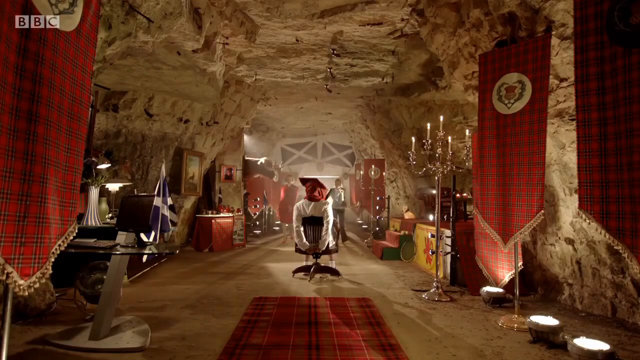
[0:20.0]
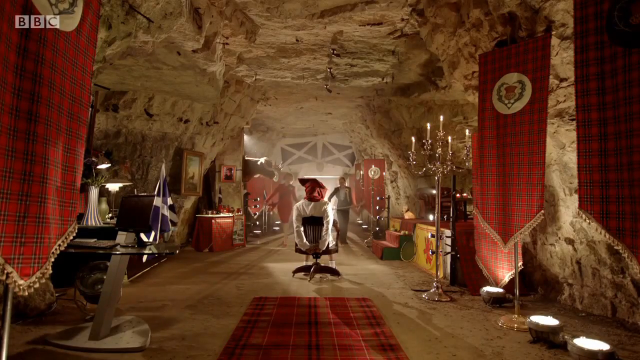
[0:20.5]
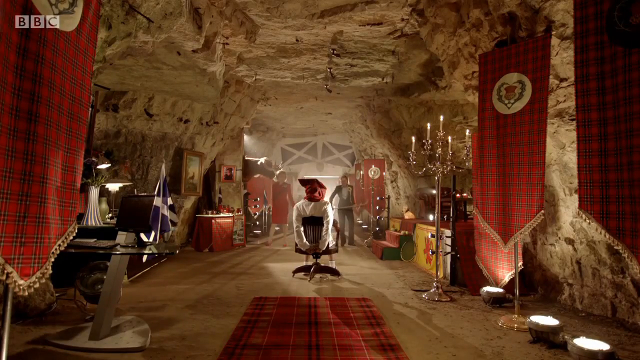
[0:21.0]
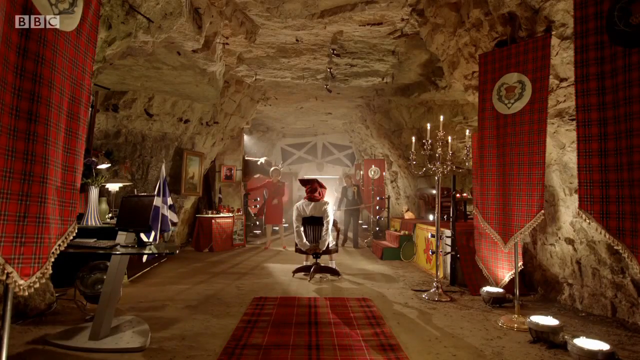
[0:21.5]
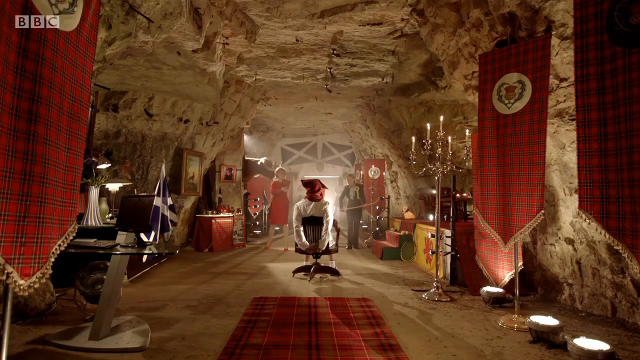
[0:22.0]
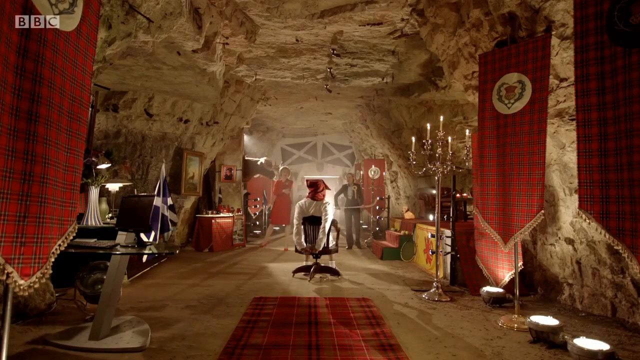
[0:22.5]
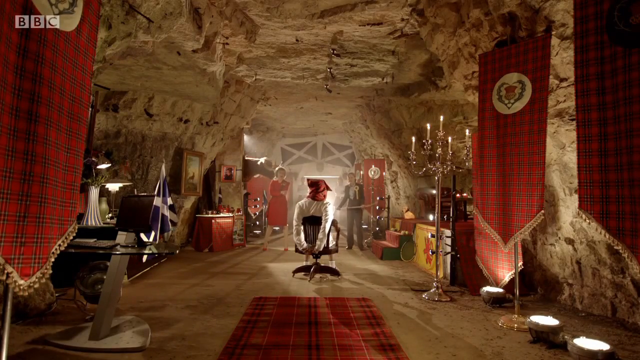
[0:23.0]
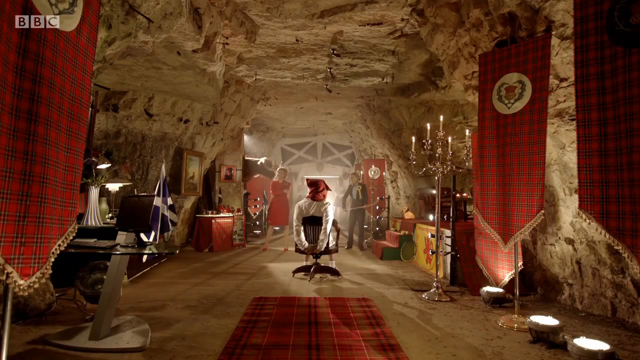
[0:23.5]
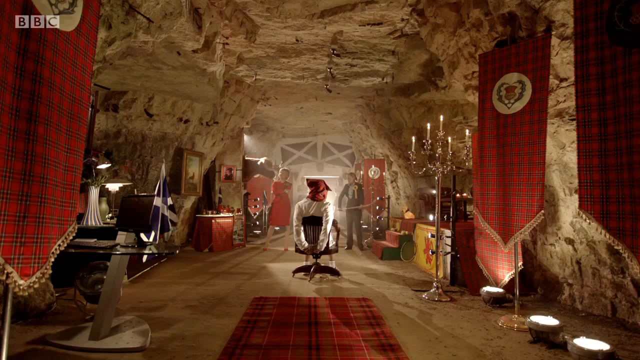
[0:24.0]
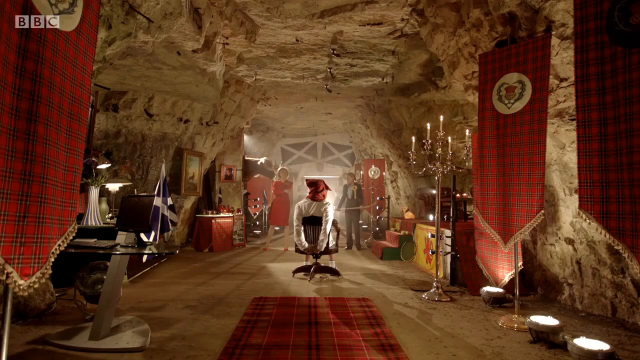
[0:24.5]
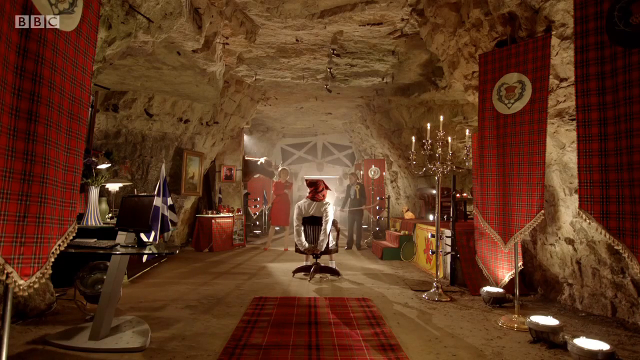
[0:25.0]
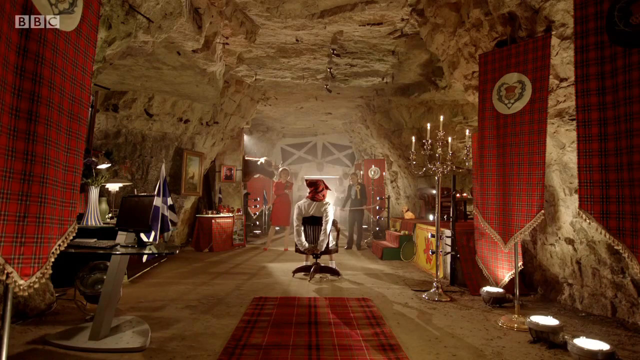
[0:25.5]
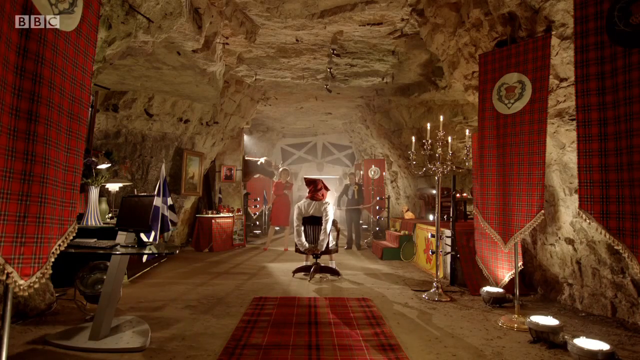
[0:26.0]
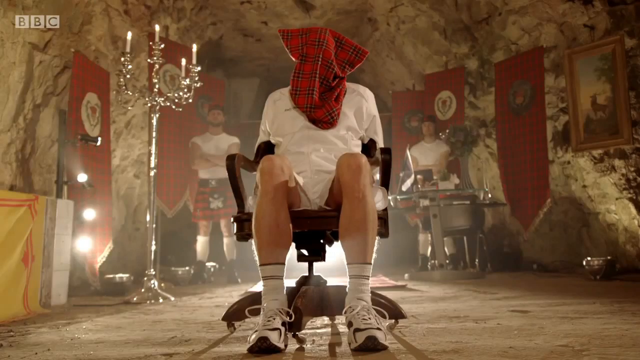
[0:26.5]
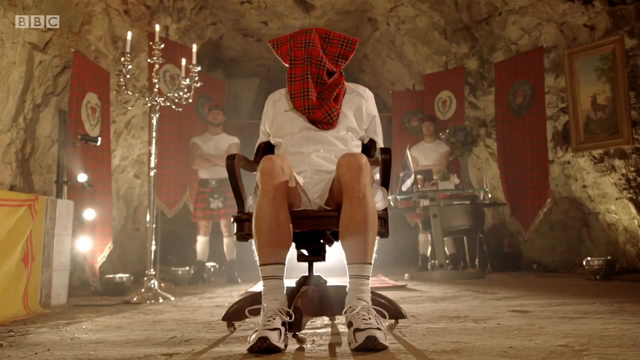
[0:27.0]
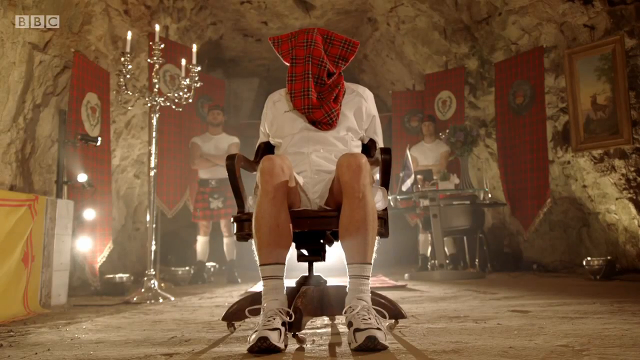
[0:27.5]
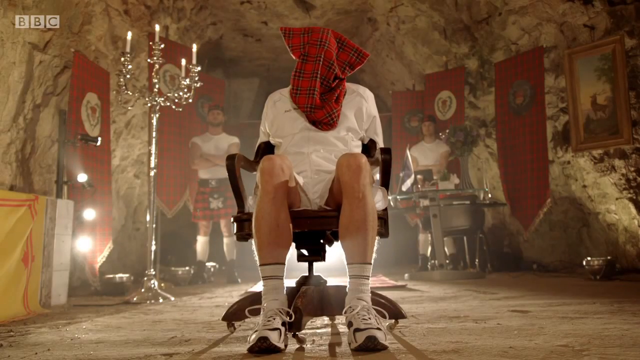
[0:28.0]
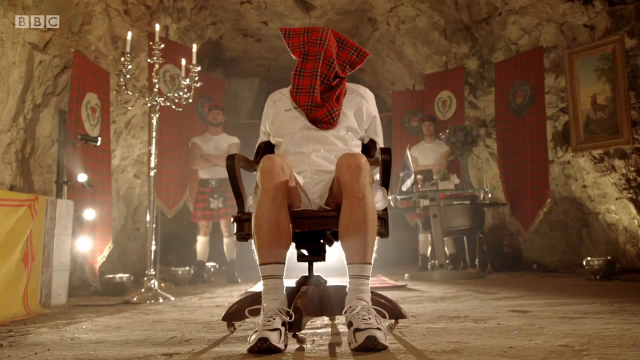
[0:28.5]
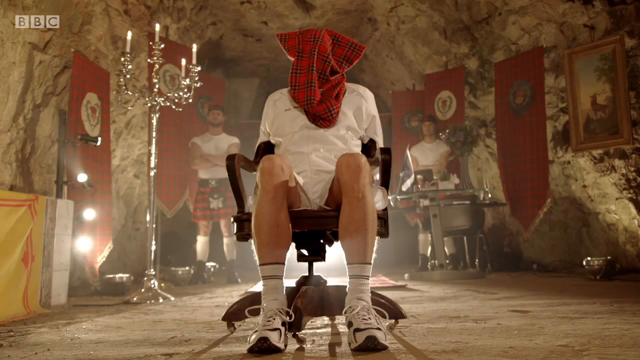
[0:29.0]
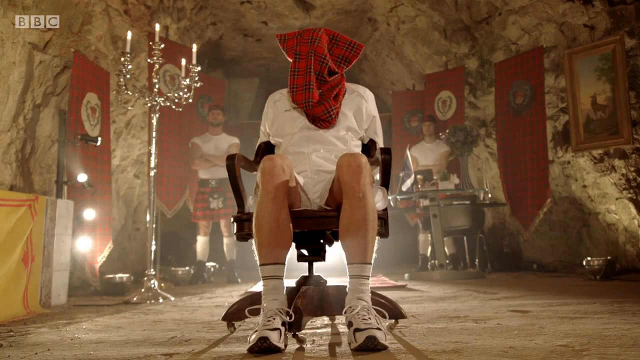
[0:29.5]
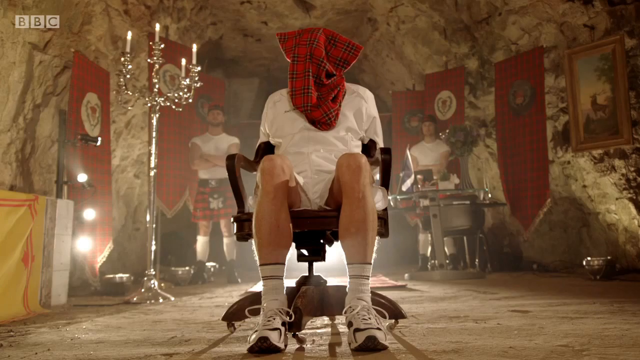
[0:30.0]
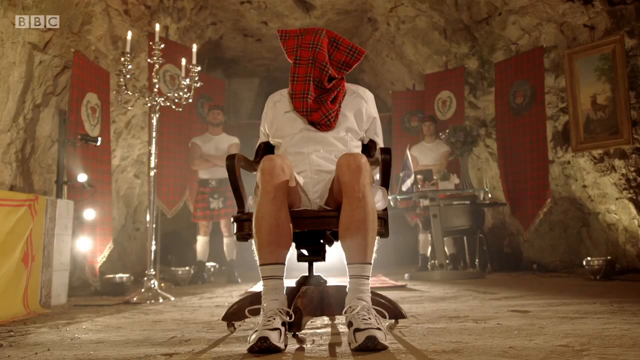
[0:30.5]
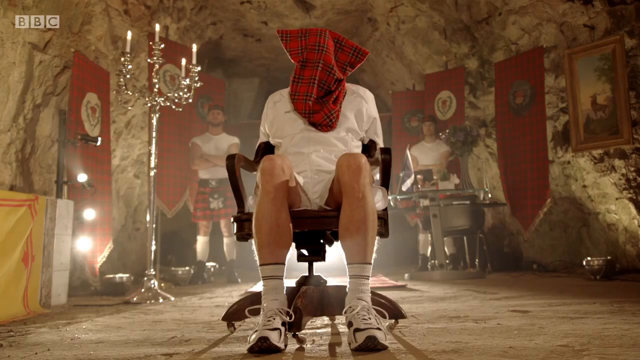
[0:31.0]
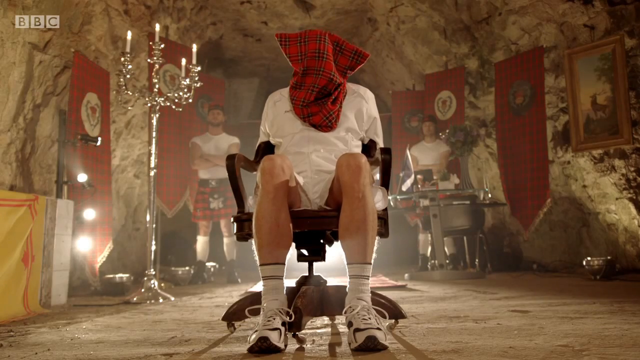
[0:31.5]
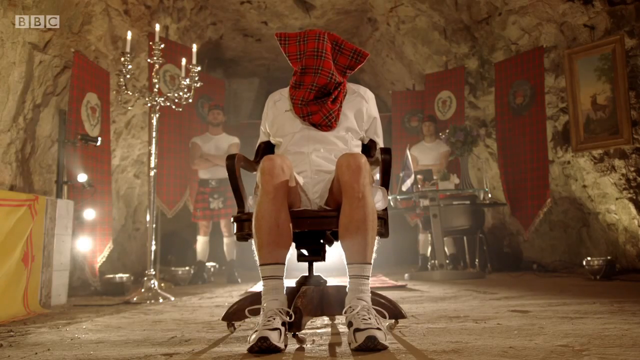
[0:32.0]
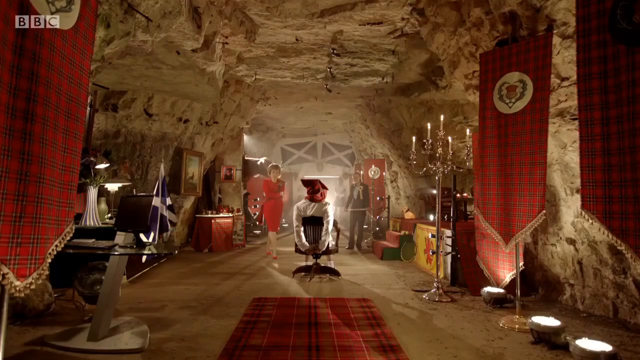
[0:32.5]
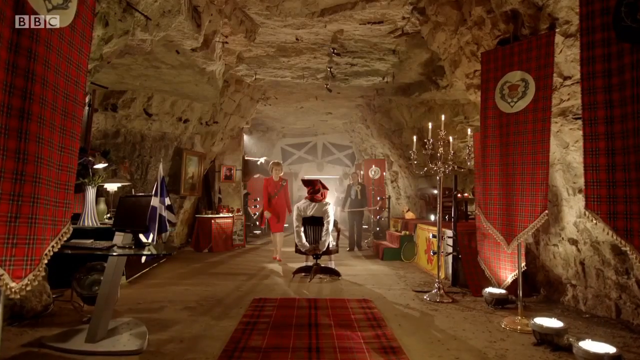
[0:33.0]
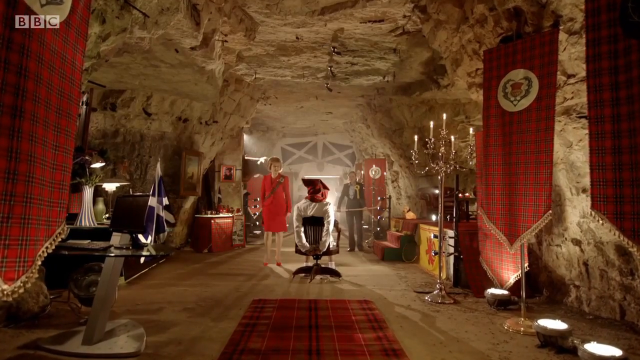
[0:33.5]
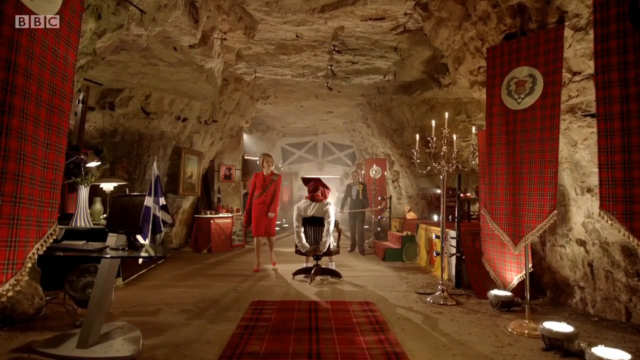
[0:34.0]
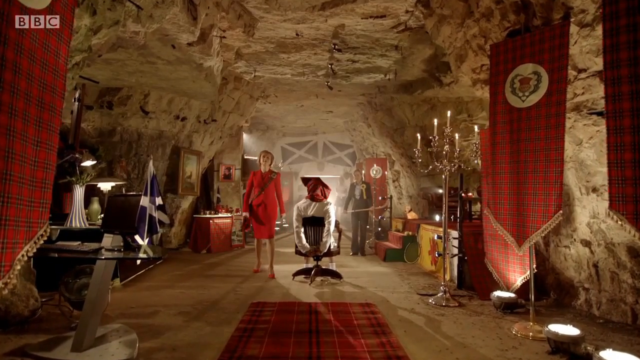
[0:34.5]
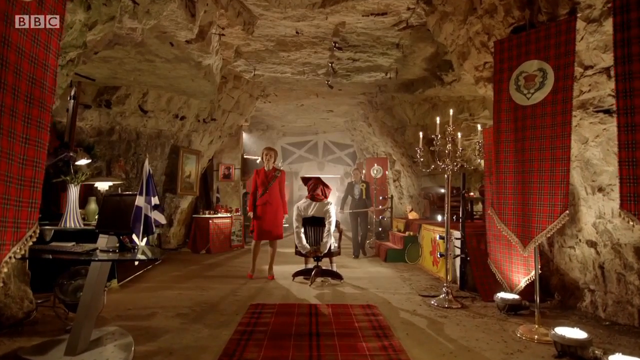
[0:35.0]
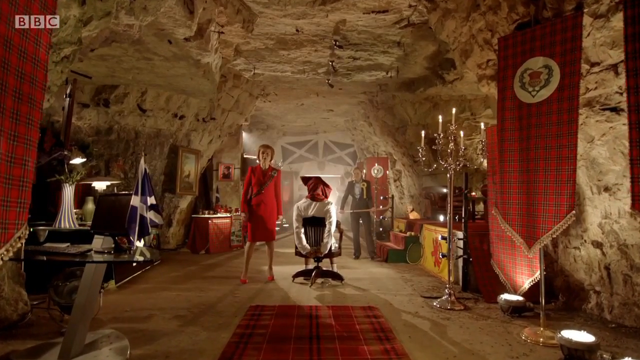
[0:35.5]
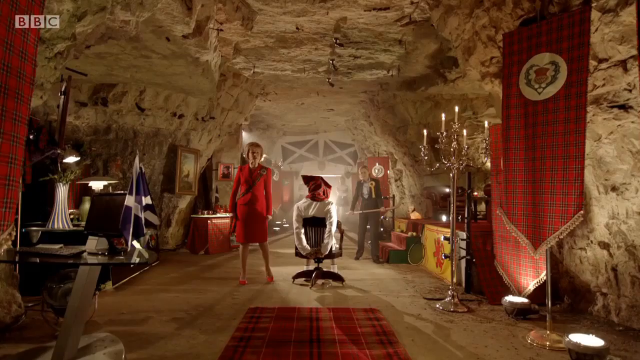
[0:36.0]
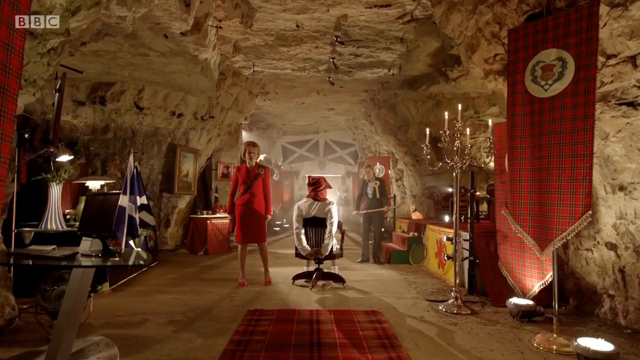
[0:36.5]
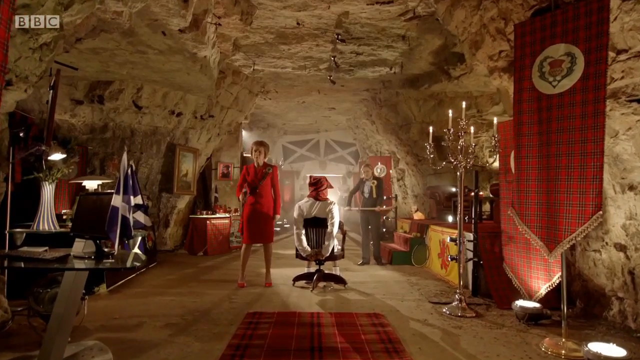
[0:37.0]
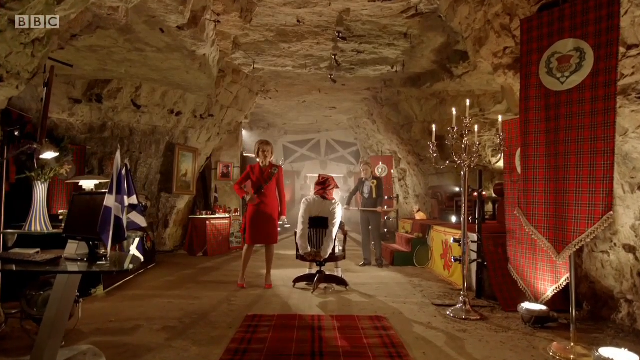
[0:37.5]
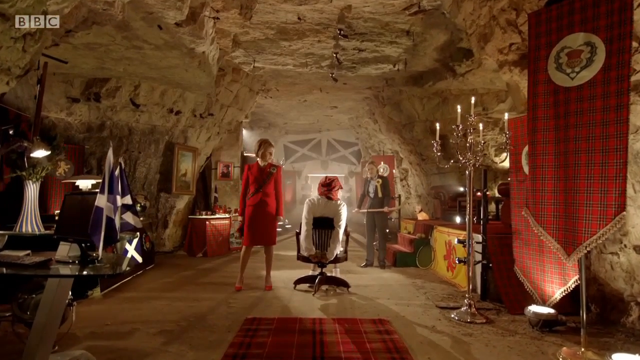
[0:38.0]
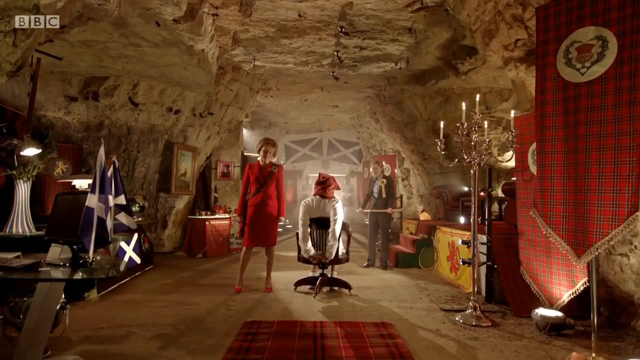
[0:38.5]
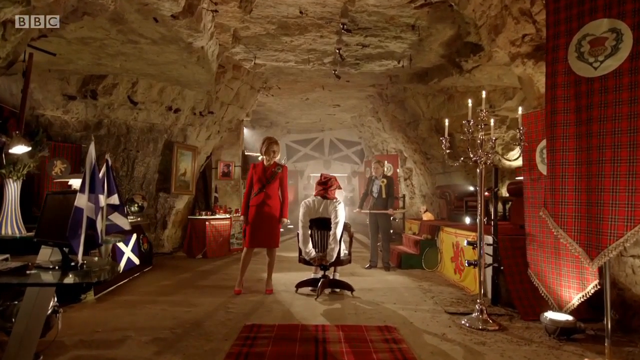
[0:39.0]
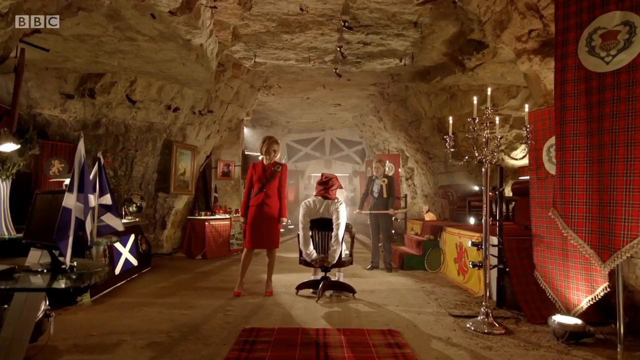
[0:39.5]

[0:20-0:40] The two women are positioned one slightly to the left and the other slightly more to the right. The woman on the right wears a black jacket and long dark pants. In the next shot, a man wearing a white shirt and white socks is framed sitting on a chair, with a red and black hood on his head. Behind him are two men with crossed arms wearing red and black skirts and white short-sleeved shirts. The woman in the red dress then moves a few steps forward until she stands still next to the hooded man. Rocky walls of a very light brown color are clearly visible all around. The room contains many objects, such as tall candelabras and various boxes, and on the back wall are two white and blue flags.